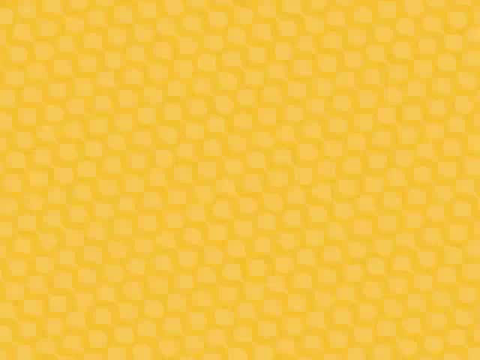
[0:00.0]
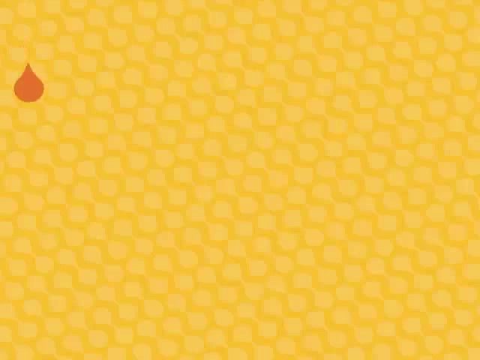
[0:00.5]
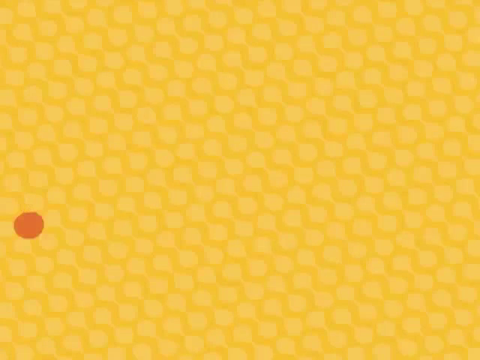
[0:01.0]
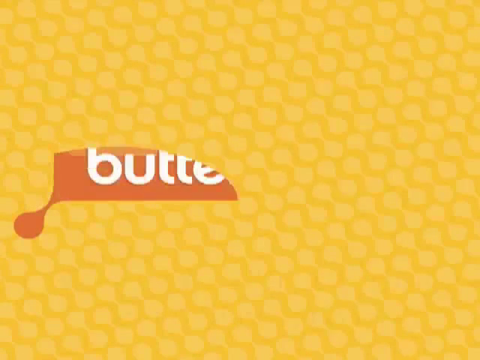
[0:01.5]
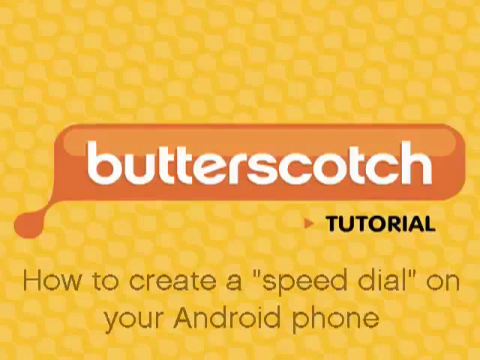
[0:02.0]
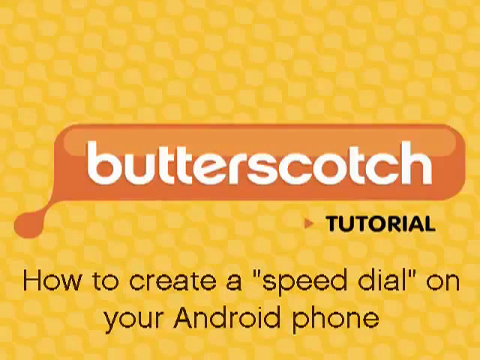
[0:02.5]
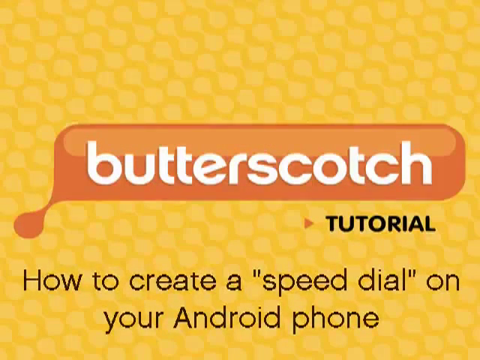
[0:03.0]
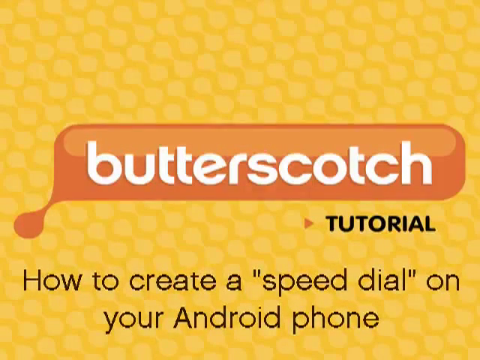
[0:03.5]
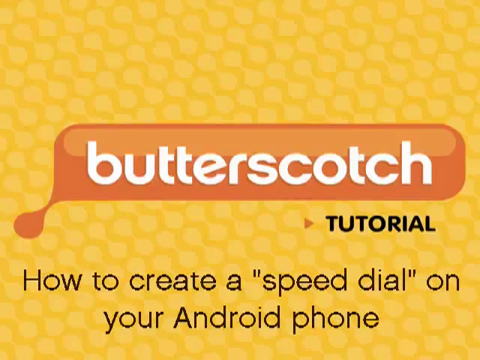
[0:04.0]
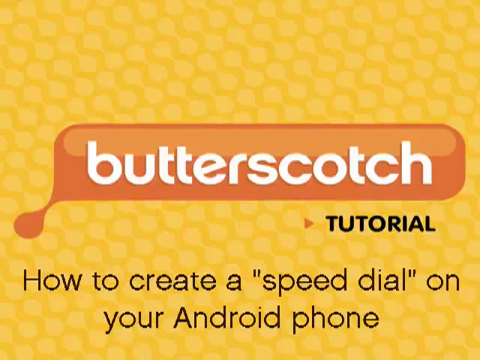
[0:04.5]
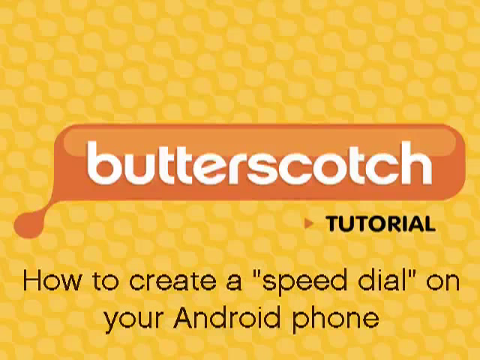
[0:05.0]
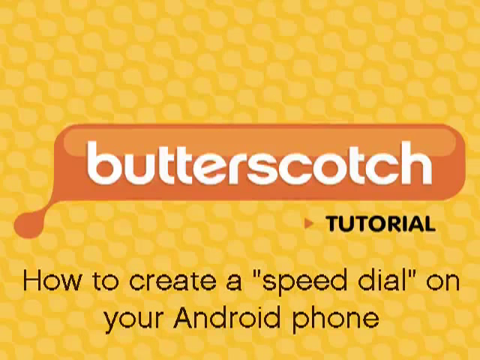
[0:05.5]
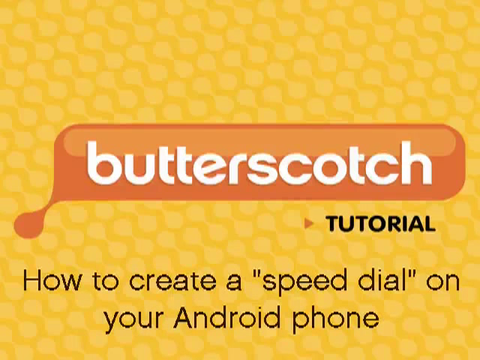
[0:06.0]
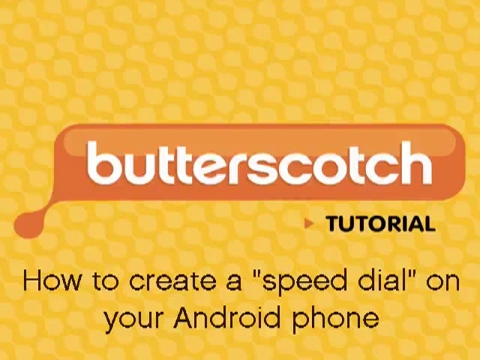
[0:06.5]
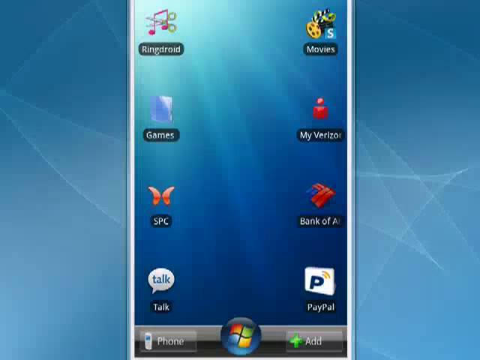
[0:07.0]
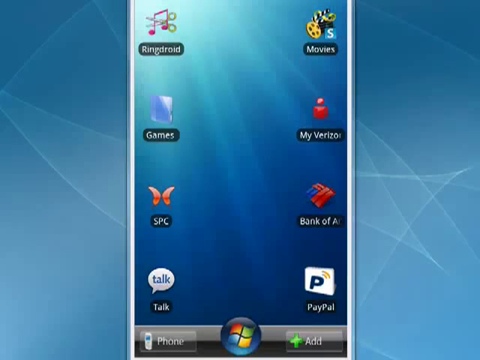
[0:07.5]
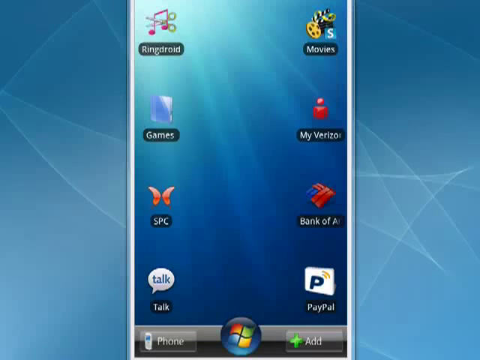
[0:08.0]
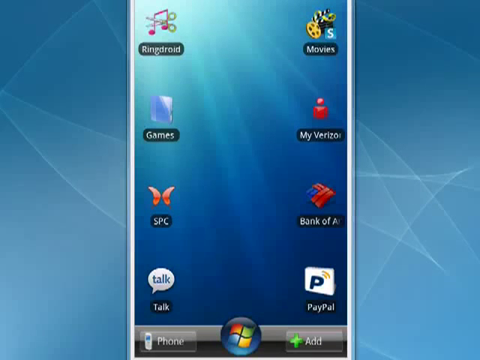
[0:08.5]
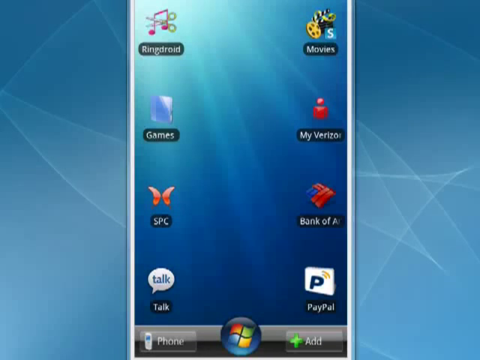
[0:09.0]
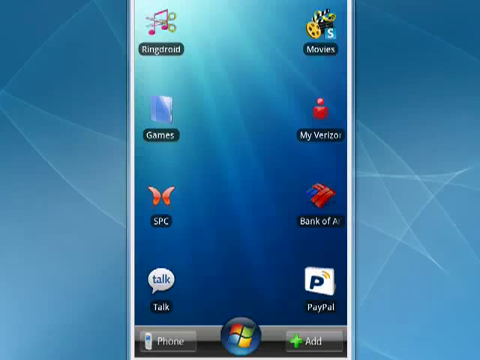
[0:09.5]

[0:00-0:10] A yellow background has a light yellow, polka-dot-like pattern on it. An image pops up with an orange background; in its center, on top of the orange, is the white text "BUTTERSCOTCH." Under that is an orange play button to the right of the screen, and right next to the play button is the bold black word "tutorial." At the very bottom of the screen it reads "HOW TO CREATE A SPEED DIAL ON YOUR ANDROID PHONE." The next screen is blue with an Android phone as the background. The thumbnails on the left side read "RingDroid," "Games," "SPC" and "Talk," and those on the right side read "Movies," "My Verizon," "Bank of America" and "PayPal." The image then switches back to the yellow background.